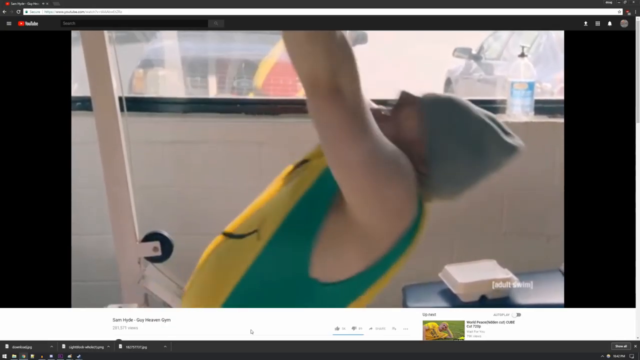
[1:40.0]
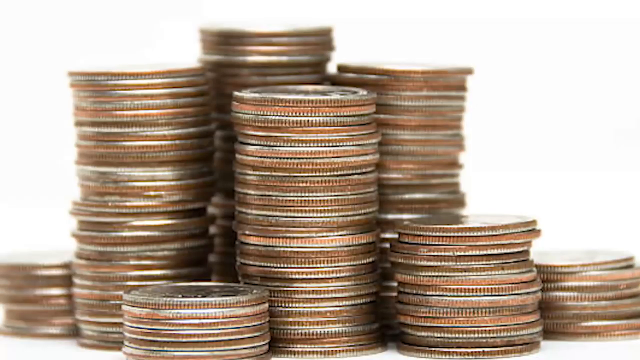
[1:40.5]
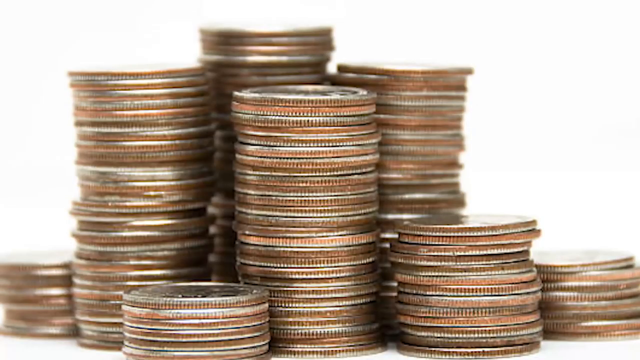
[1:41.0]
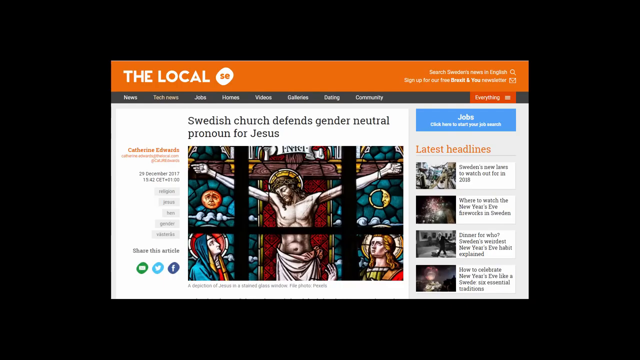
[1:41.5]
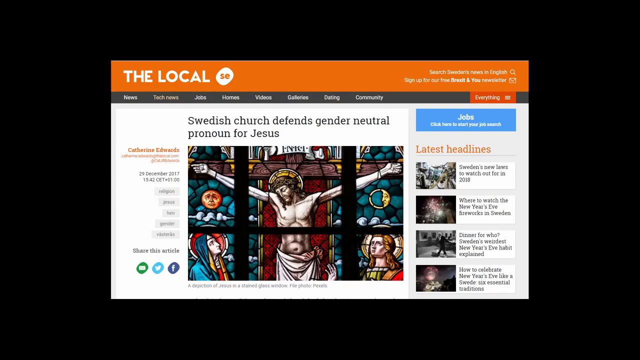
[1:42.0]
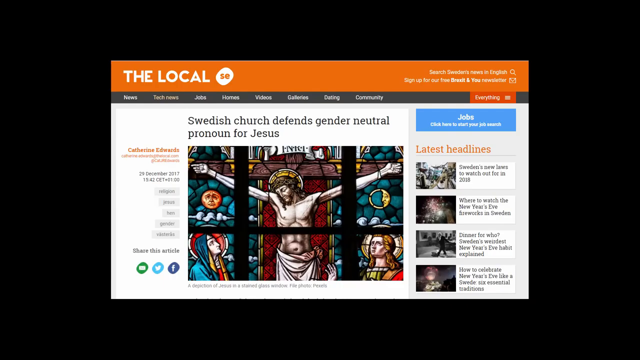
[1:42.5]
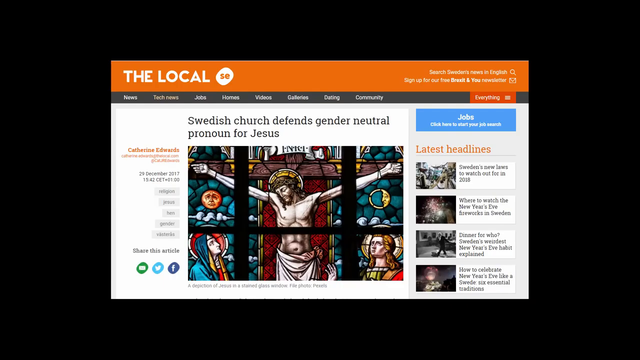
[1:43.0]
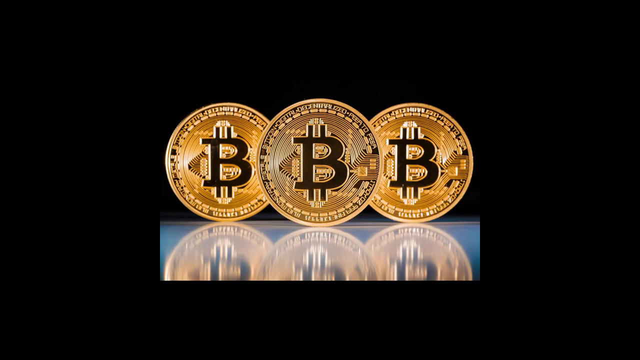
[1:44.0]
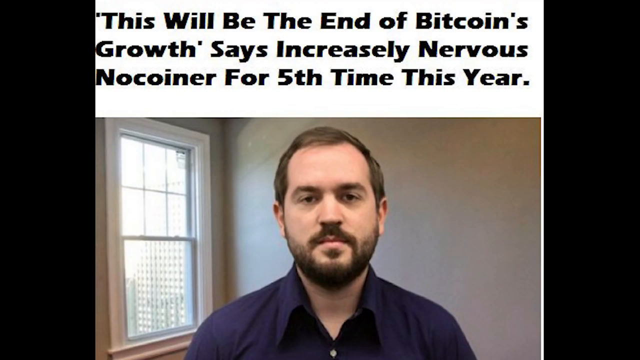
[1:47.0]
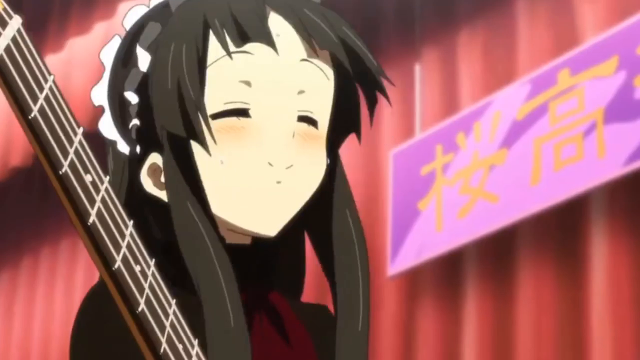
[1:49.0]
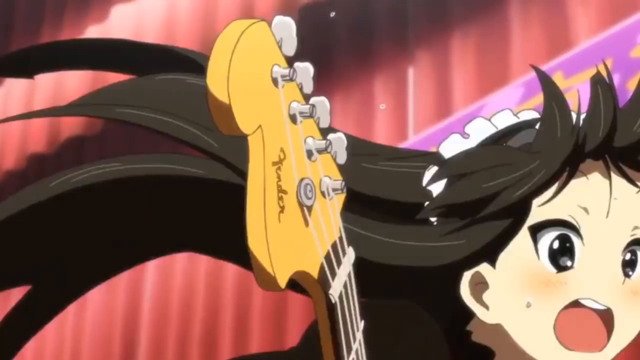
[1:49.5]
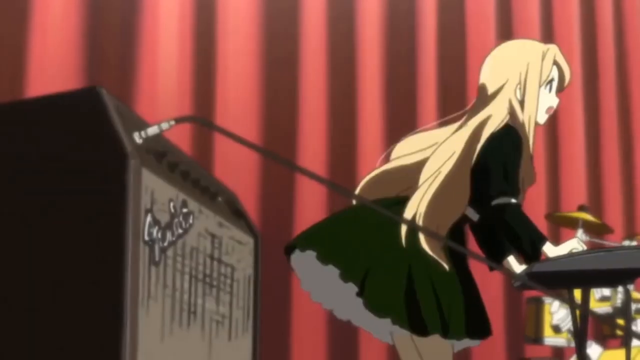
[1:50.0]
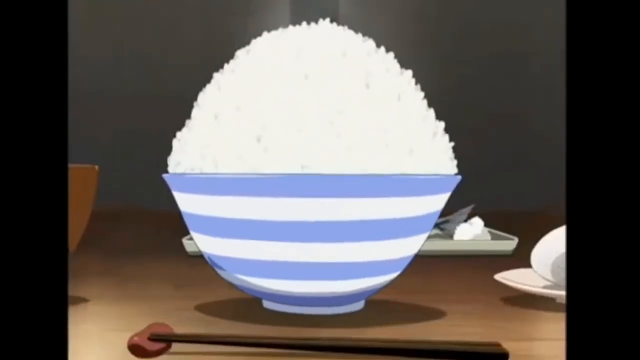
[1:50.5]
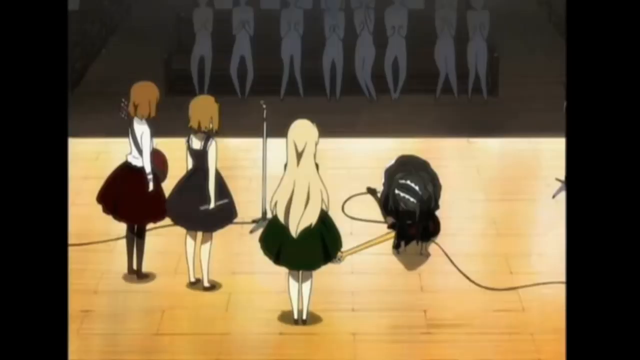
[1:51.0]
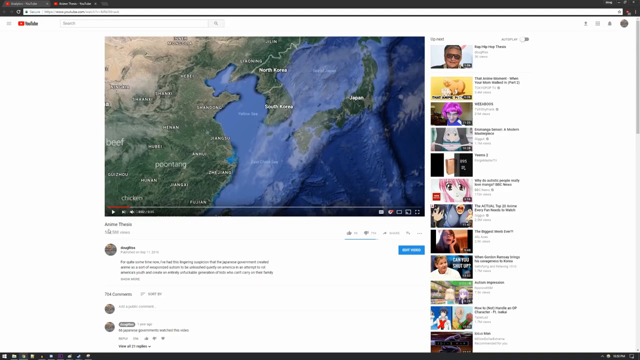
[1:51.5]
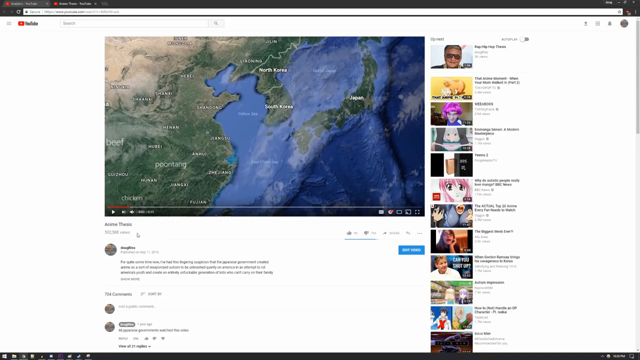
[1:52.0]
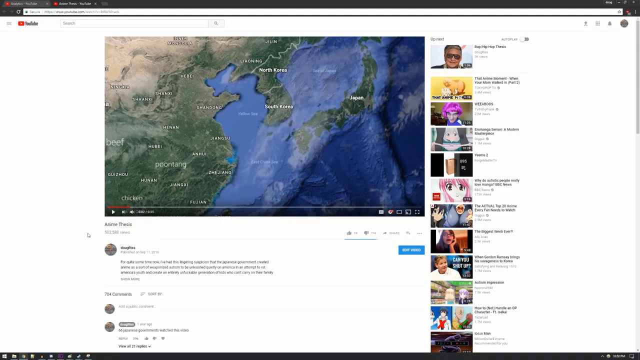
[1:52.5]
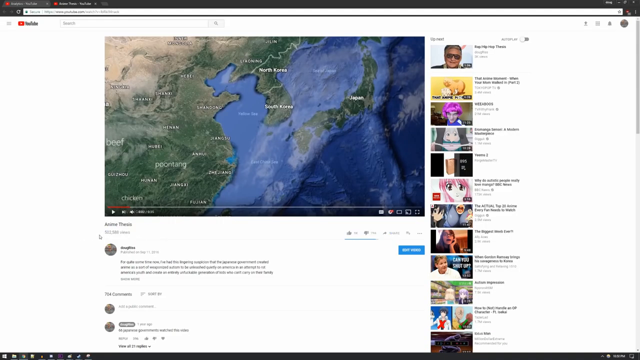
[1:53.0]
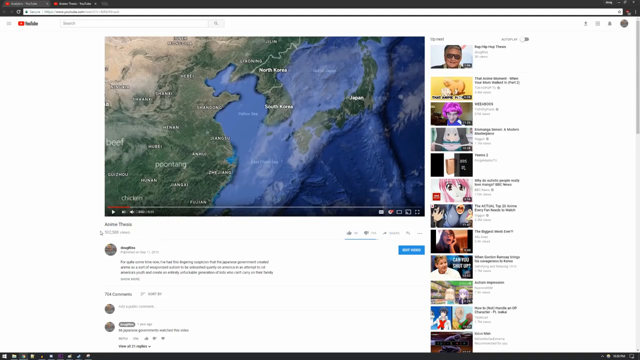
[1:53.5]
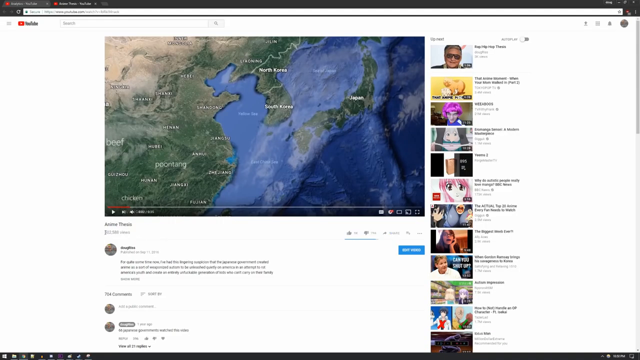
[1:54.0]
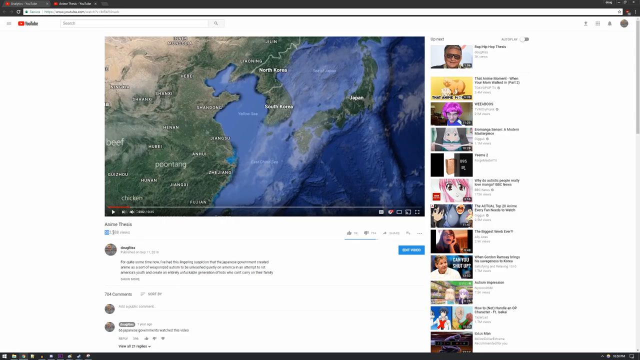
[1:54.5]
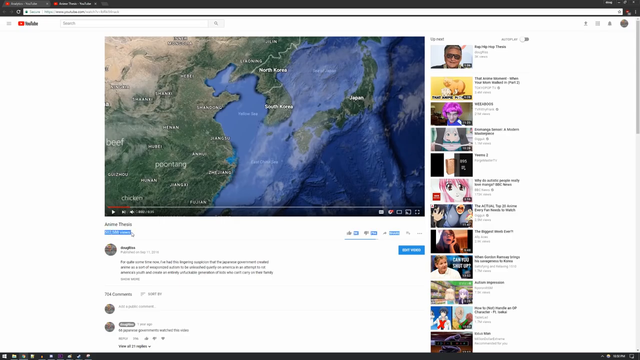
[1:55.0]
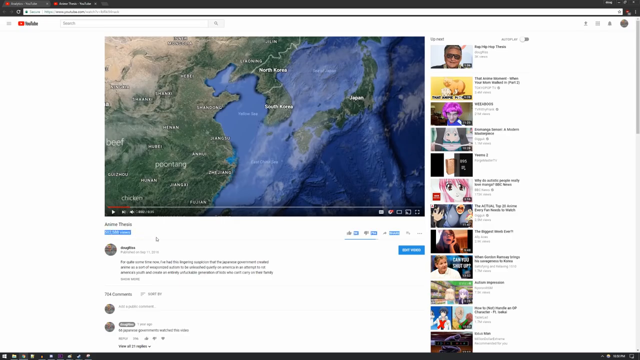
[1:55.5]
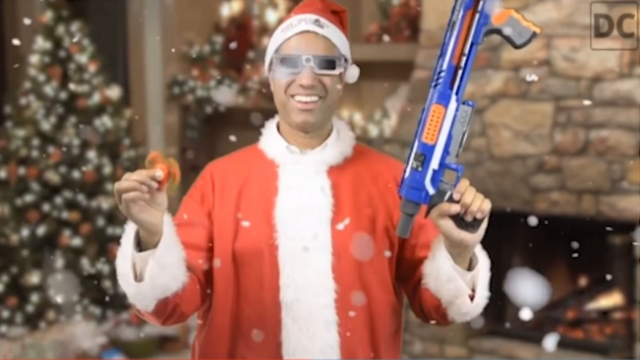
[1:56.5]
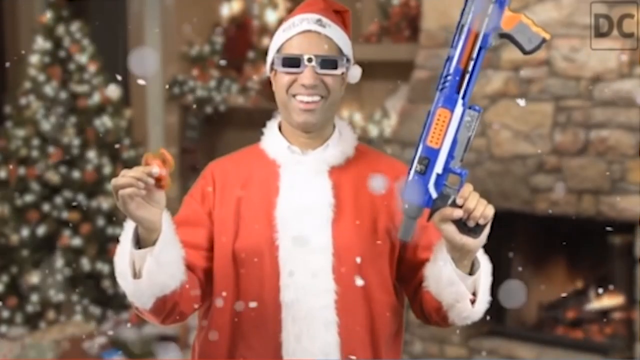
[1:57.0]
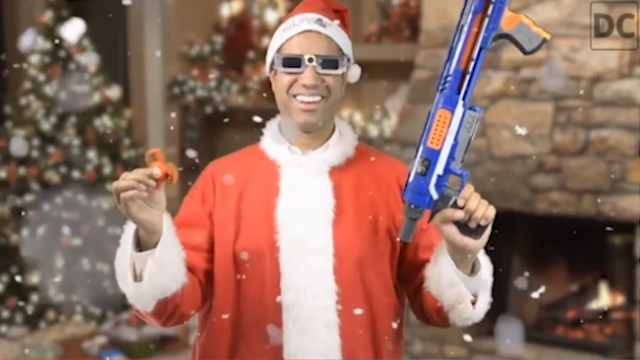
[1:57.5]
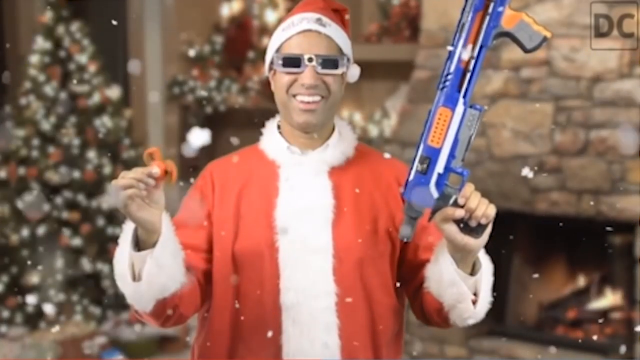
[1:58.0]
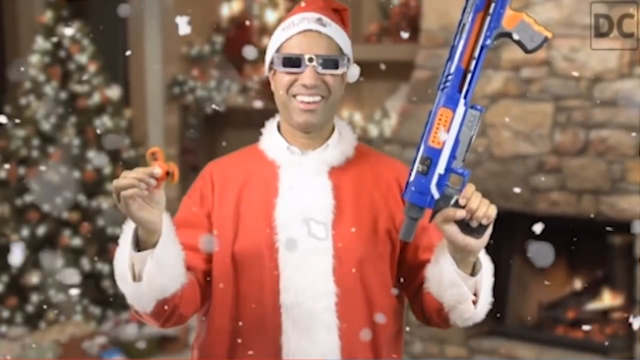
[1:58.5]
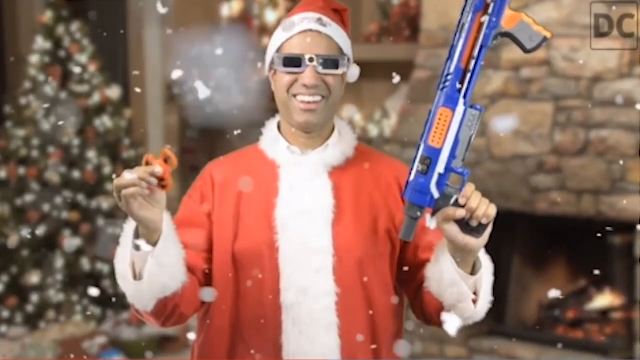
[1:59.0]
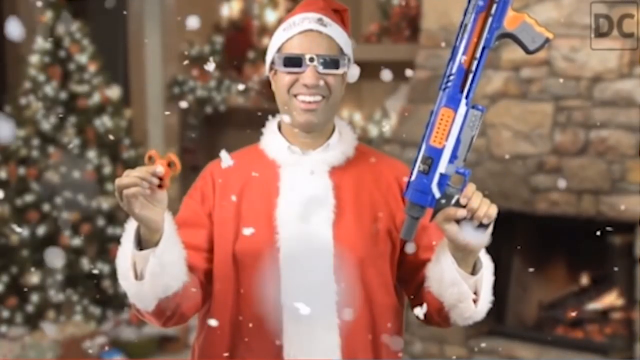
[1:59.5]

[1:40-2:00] Someone pulls down weights. A pile of money has milk in front of it. Jesus Christ appears in a stained glass window. Coins marked with the letter B, standing for Bitcoin, are shown, along with an article on the person who came out with Bitcoin. A bowl of popcorn, some cartoon characters, and a map showing green land and water appear. A man dressed in a Santa suit holds a Nerf gun in one hand and twirls a Nerf bullet in the other. He wears sunglasses, stands looking straight into the camera and smiles, with a Christmas tree and Christmas decorations behind him and fake snow falling in front of him.